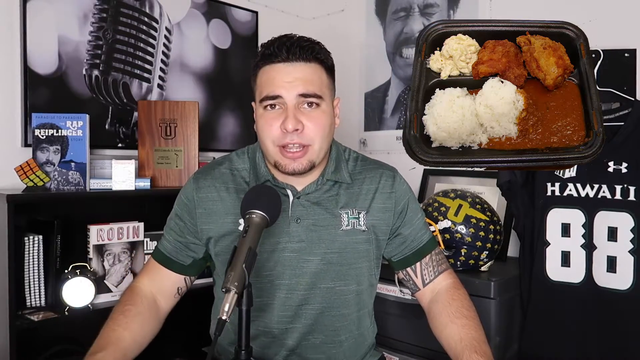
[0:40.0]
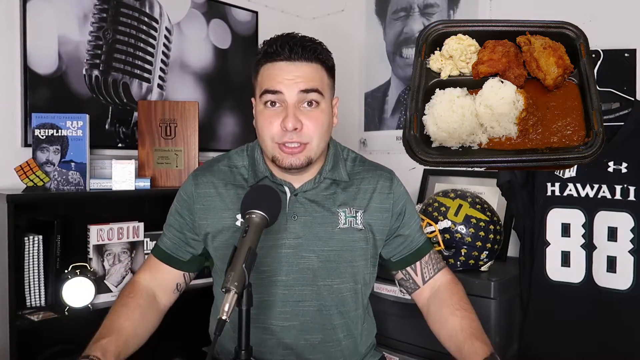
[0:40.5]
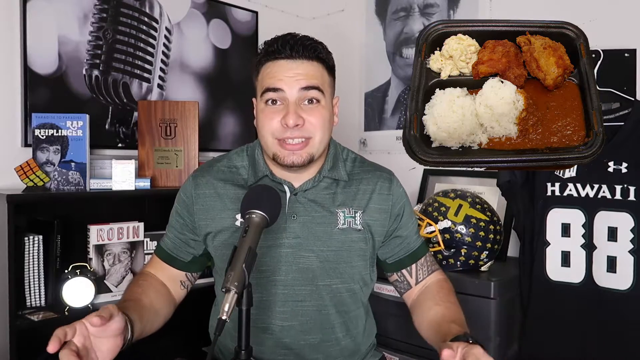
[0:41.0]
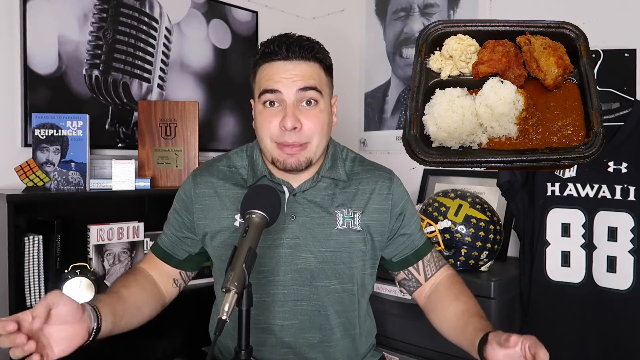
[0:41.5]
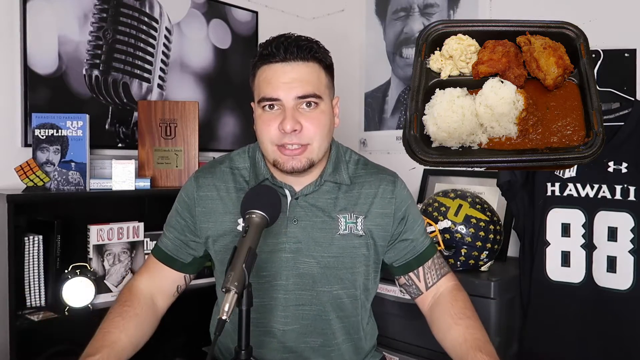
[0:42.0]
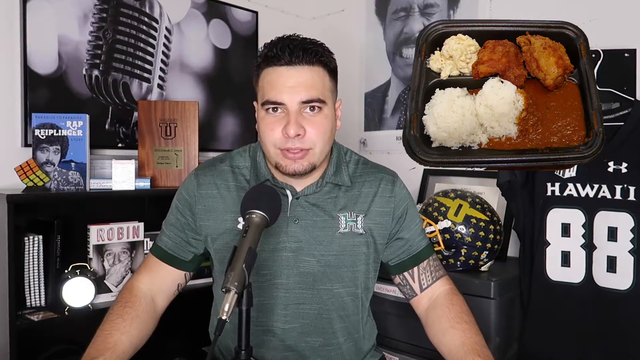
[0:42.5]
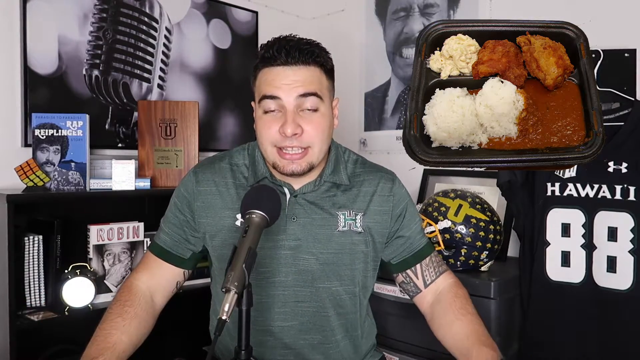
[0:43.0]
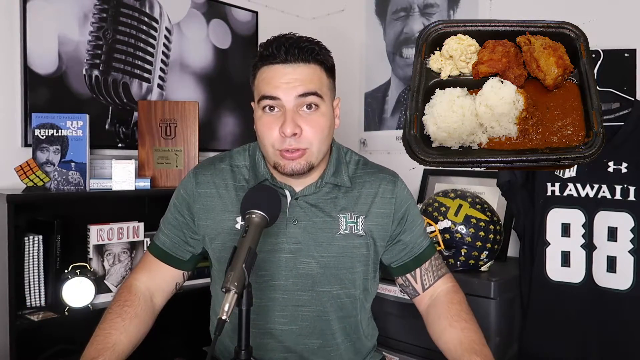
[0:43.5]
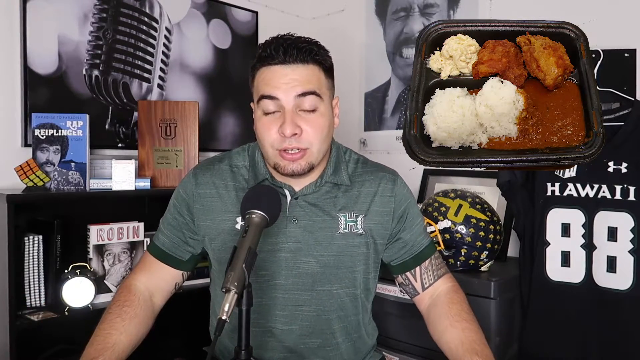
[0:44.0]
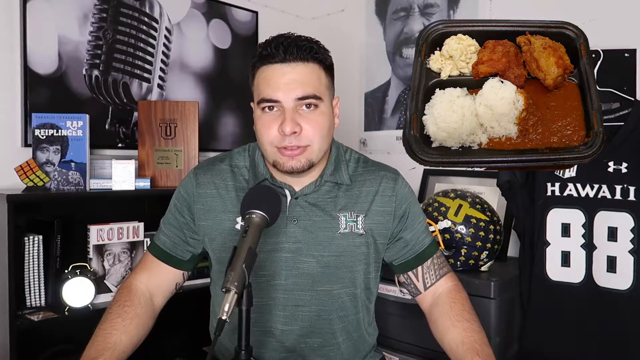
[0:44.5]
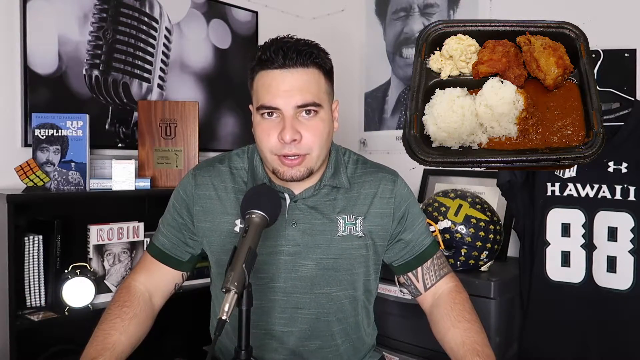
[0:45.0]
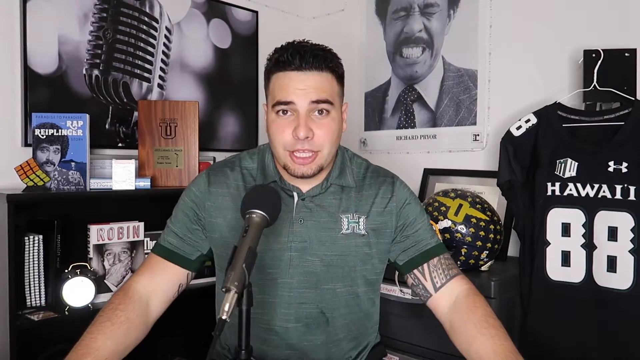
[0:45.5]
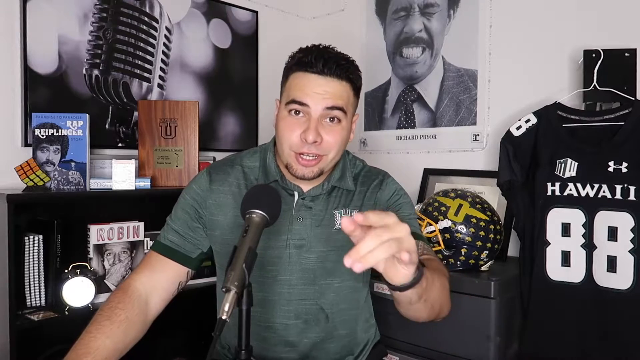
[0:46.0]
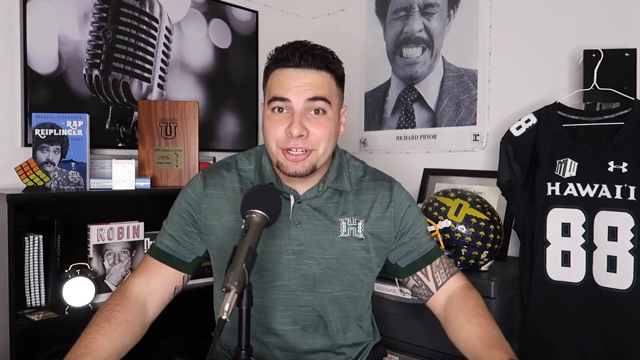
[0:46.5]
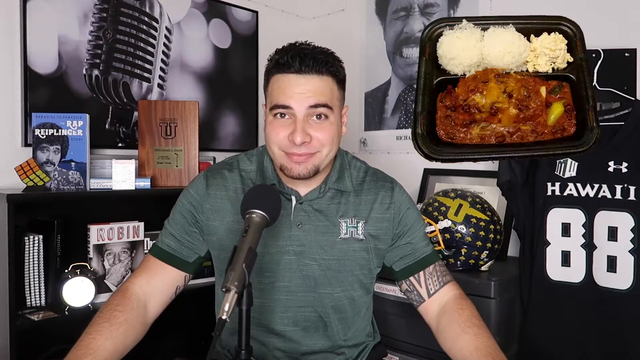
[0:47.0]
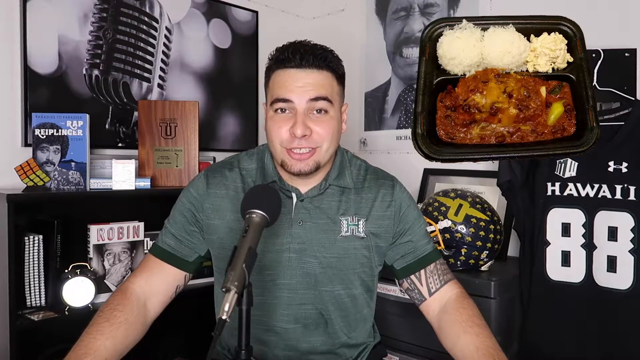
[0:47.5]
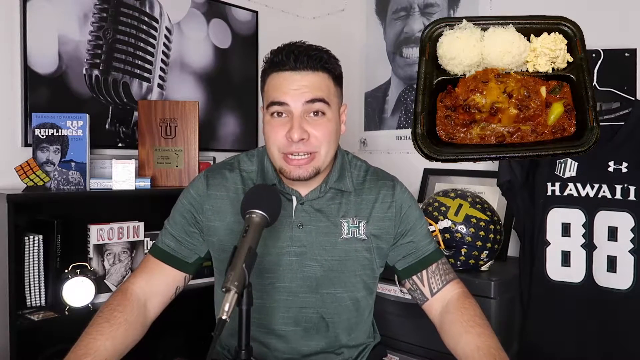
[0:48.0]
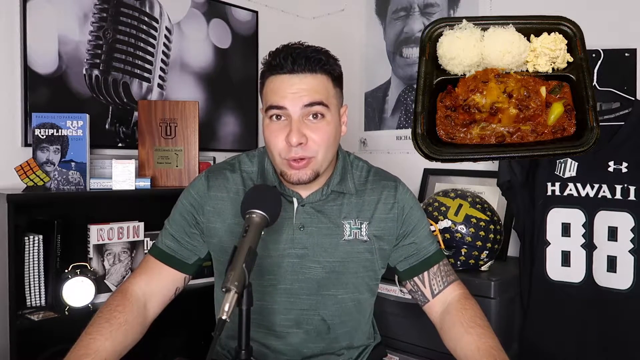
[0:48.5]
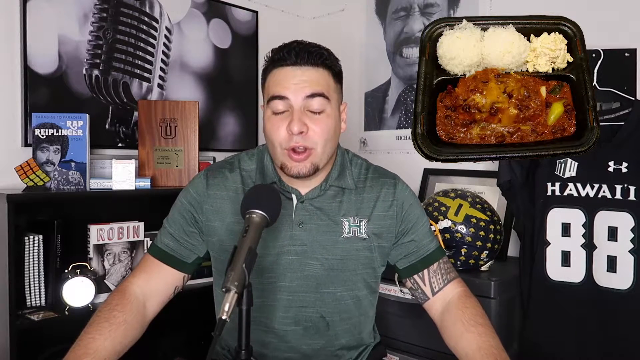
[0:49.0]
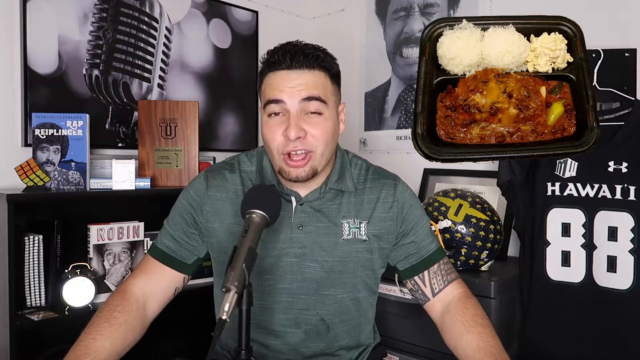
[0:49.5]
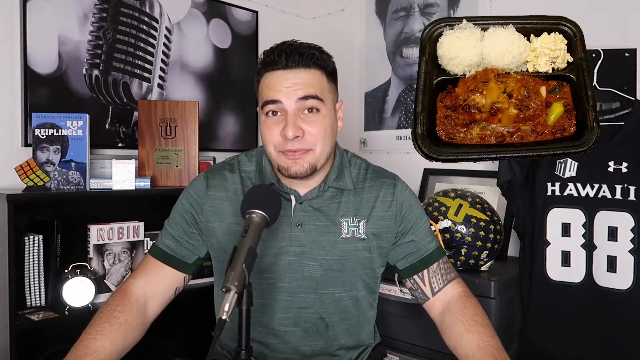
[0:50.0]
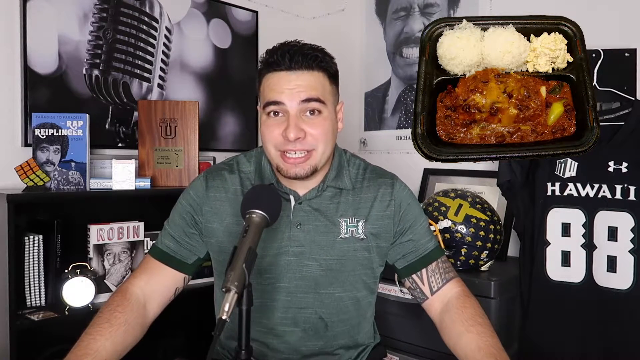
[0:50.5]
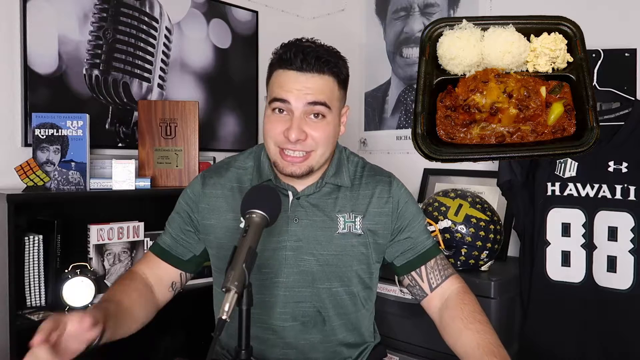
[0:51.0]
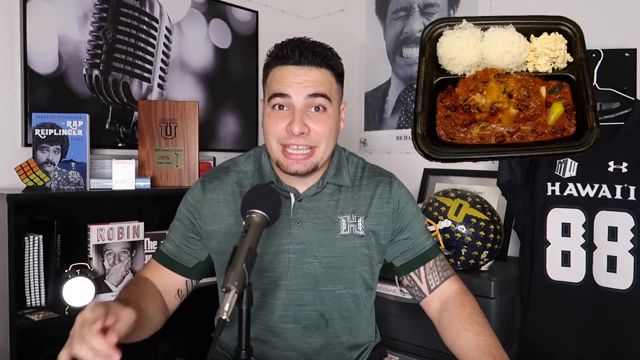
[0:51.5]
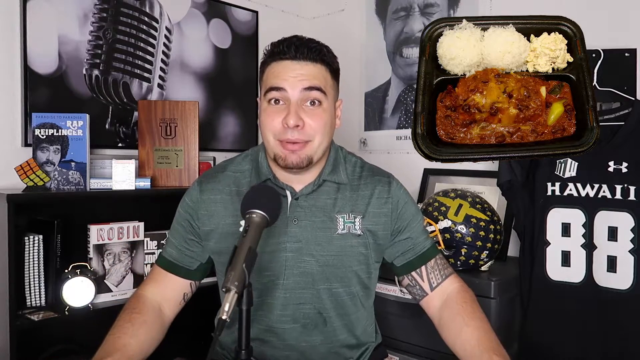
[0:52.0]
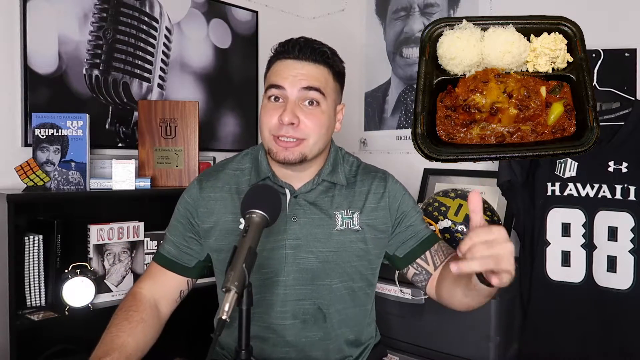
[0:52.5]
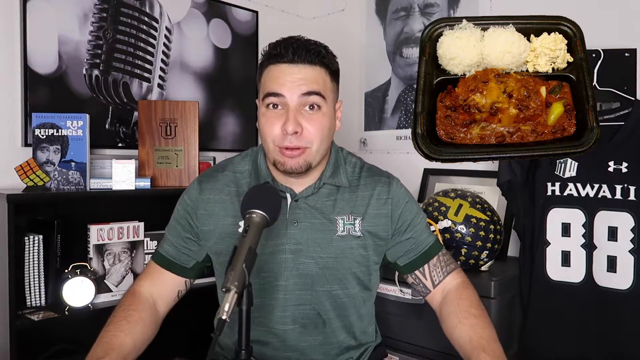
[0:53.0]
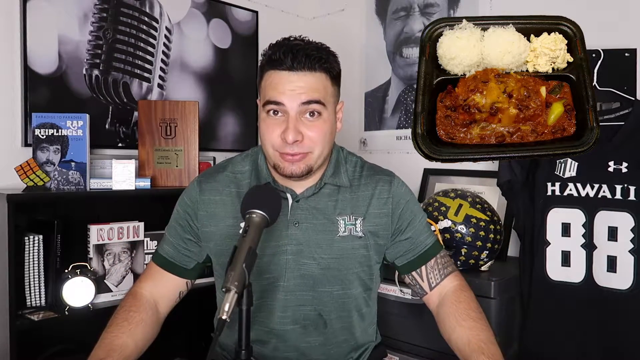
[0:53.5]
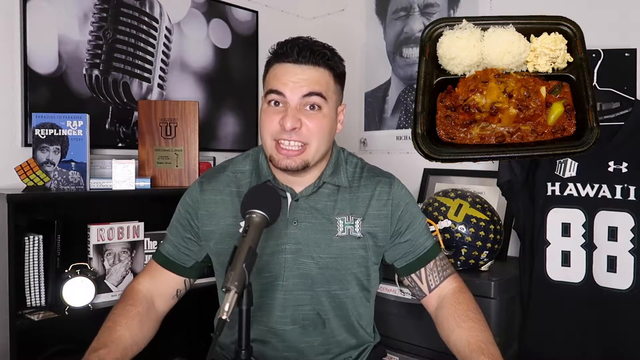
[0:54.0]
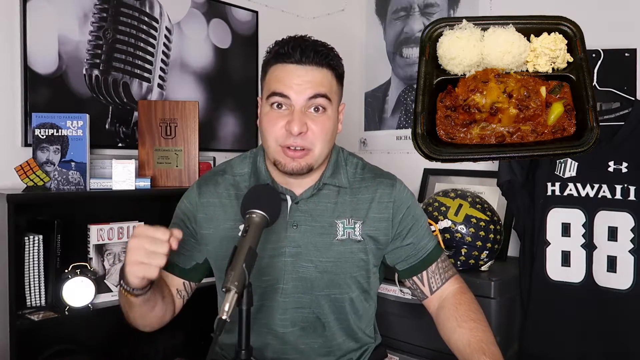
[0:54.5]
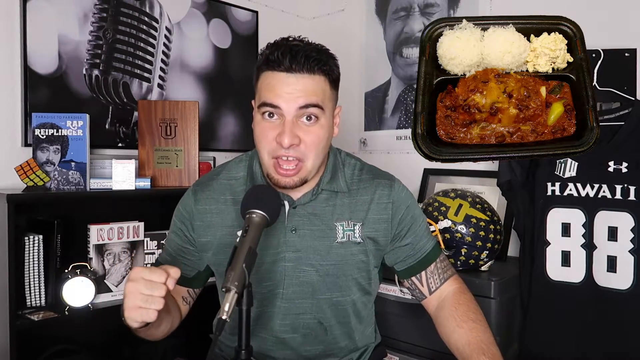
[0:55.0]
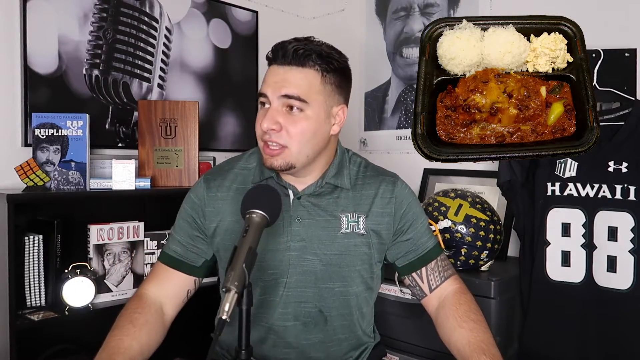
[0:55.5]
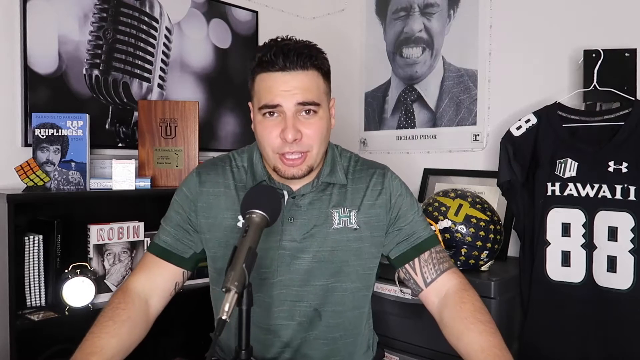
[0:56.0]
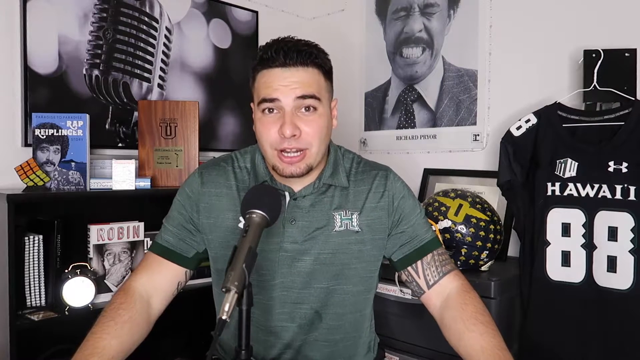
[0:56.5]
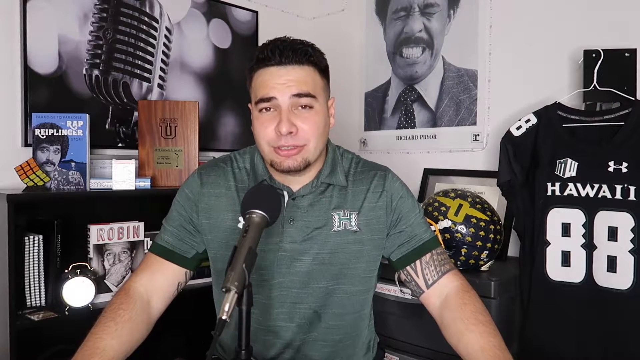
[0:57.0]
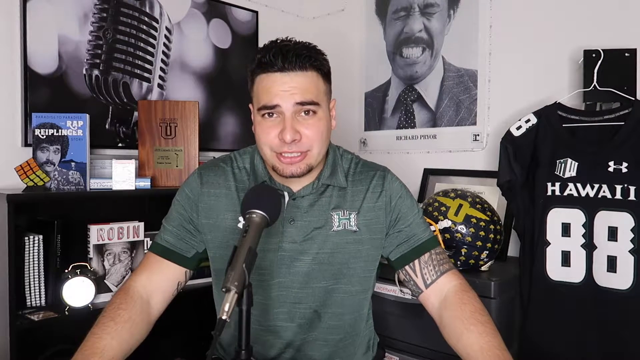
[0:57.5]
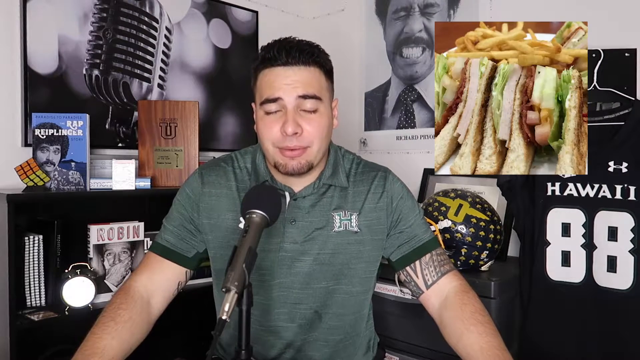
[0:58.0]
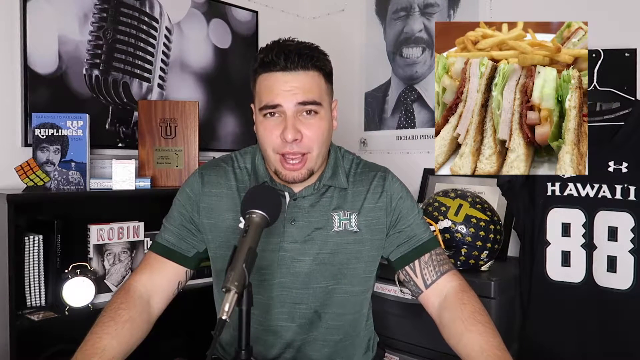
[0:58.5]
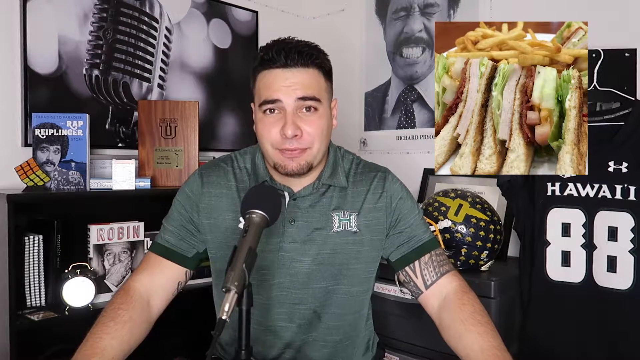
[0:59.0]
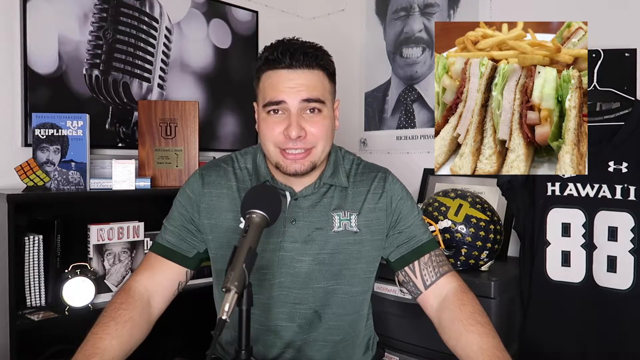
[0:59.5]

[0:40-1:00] The man in the green shirt with the letter H on it and short black gelled-up hair is in front of the background while a superimposed image of a meal in a plastic box is shown at the top right. The meal has a scoop of mashed potato, two chicken-nugget-style items at the top, and two scoops of rice in a brown gravy-looking substance at the bottom. The man looks excited and smiles as he speaks, lowering his arms expressively. He points at the camera, the meal disappears, and a different one takes its place in the same black food container: two scoops of rice at the top, a scoop of mashed potato next to them, and what appears to be a large piece of meat covered in a cheesy sauce with some peppers on the right-hand side of the bottom tray. The man raises each of his hands in succession, giving the horns, apparently in approval of the meal, then raises one arm in a fist-bump-style gesture, again suggesting he probably likes the dish at the top right of the screen.